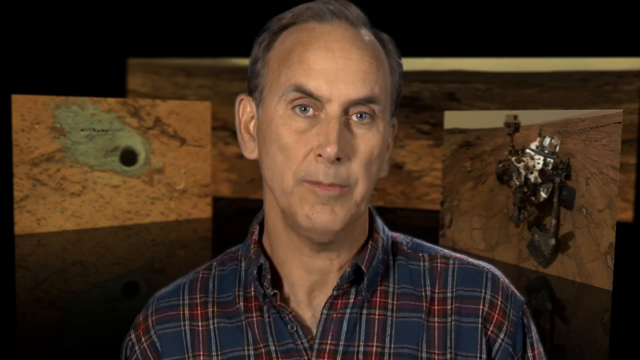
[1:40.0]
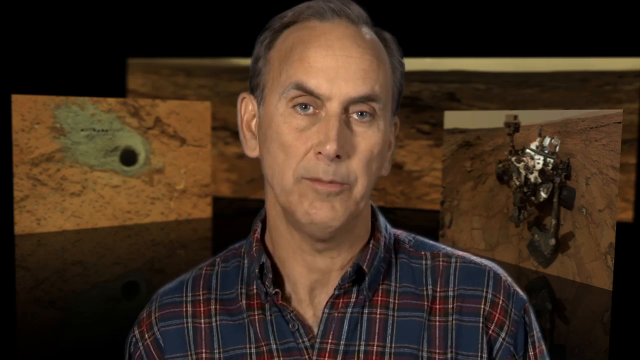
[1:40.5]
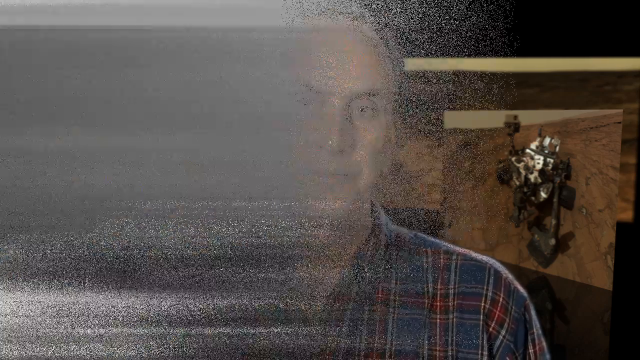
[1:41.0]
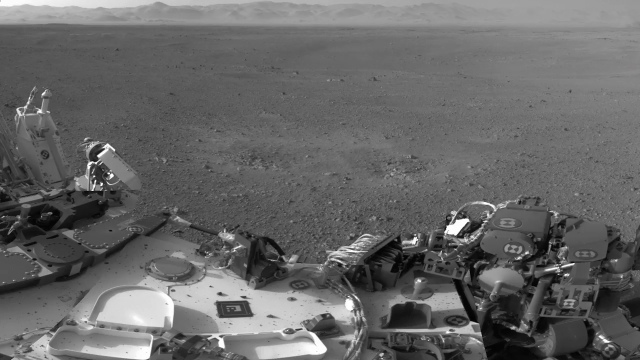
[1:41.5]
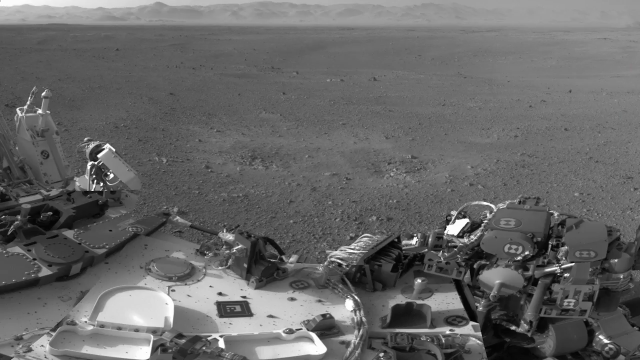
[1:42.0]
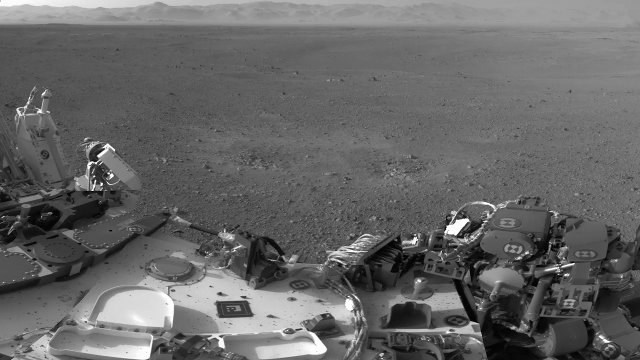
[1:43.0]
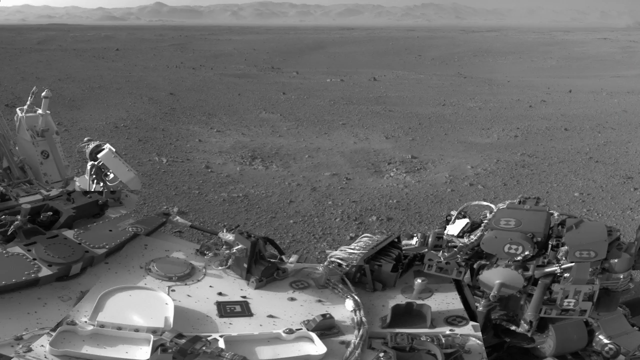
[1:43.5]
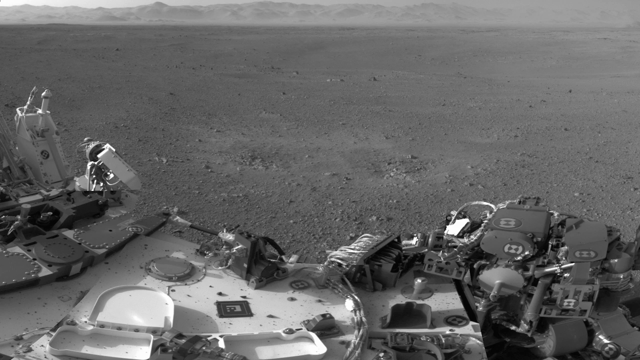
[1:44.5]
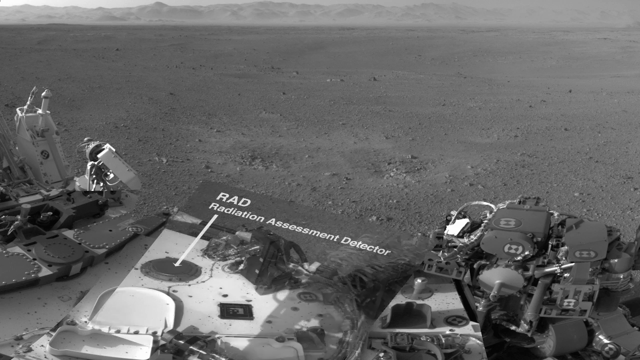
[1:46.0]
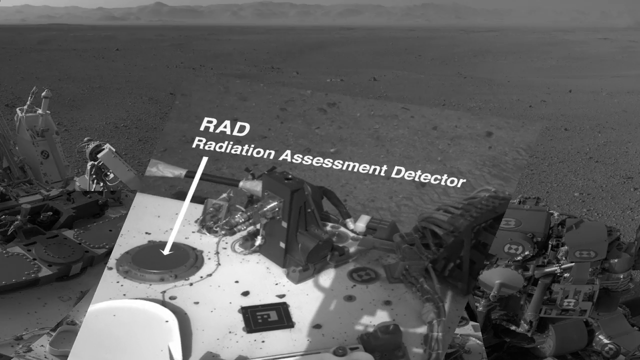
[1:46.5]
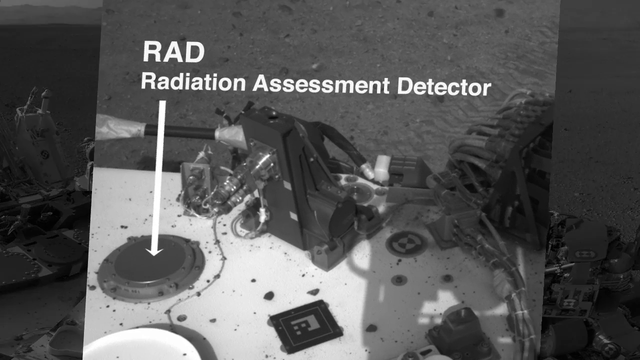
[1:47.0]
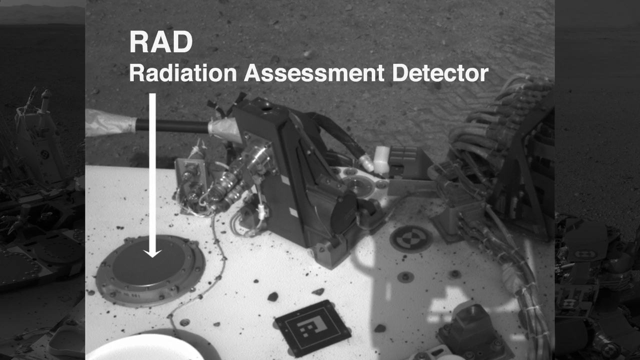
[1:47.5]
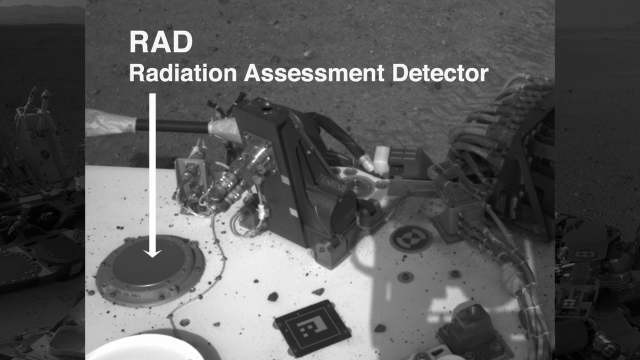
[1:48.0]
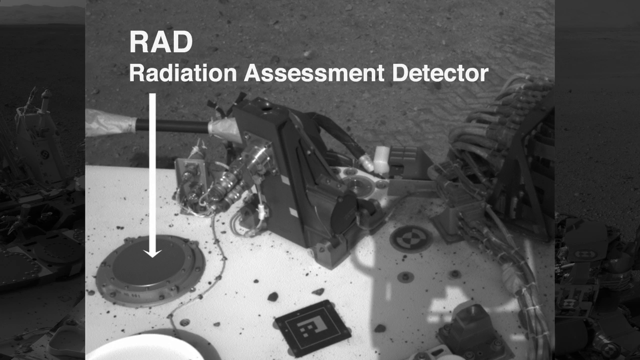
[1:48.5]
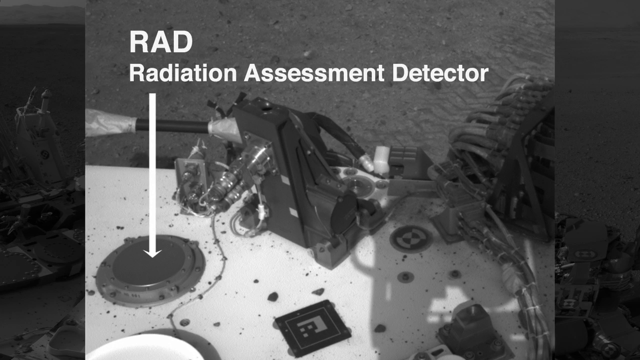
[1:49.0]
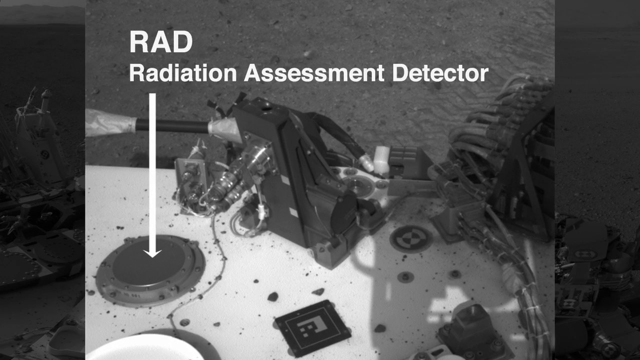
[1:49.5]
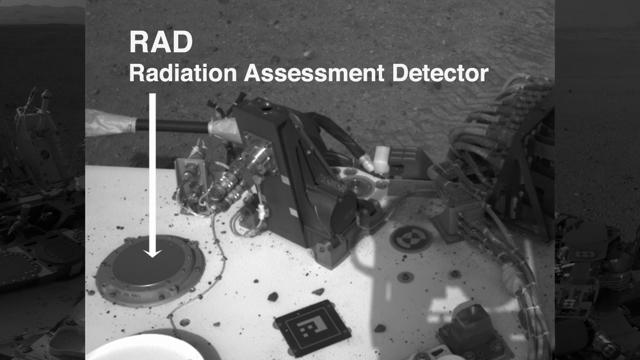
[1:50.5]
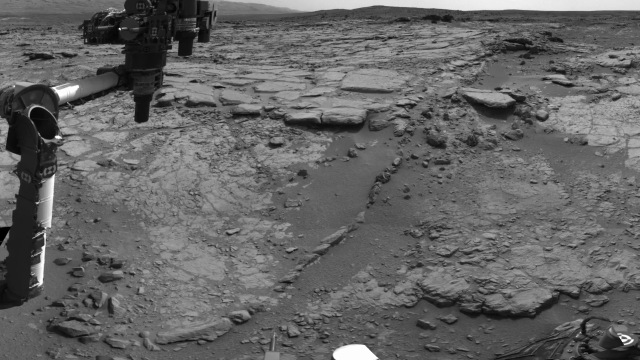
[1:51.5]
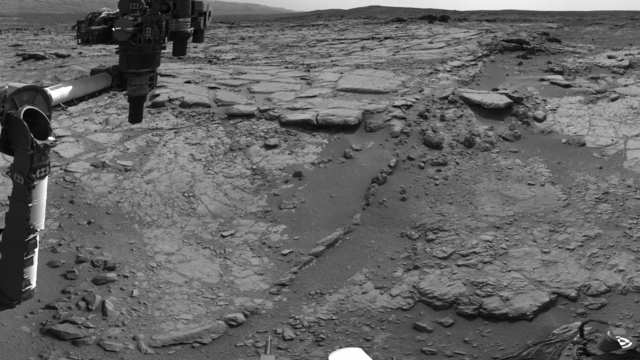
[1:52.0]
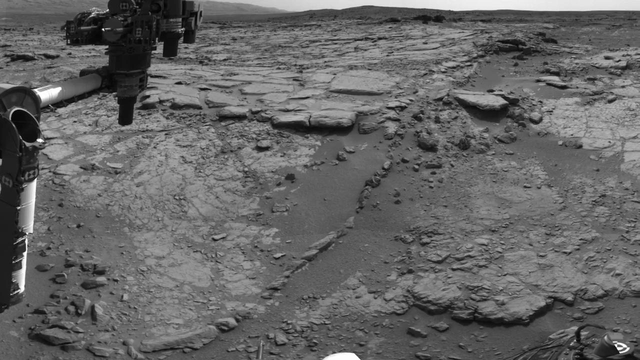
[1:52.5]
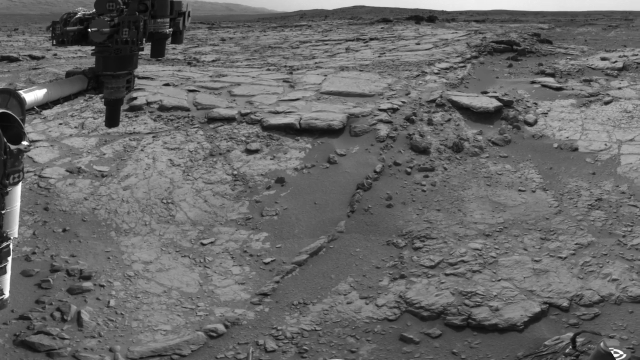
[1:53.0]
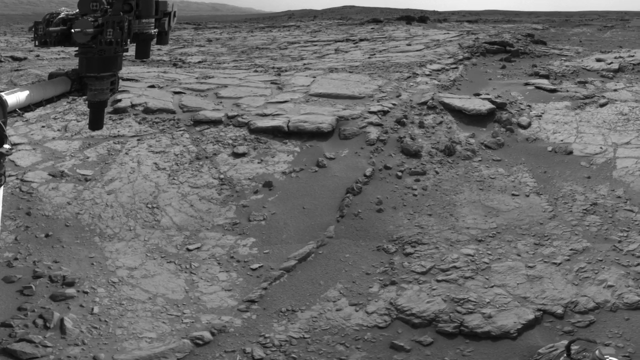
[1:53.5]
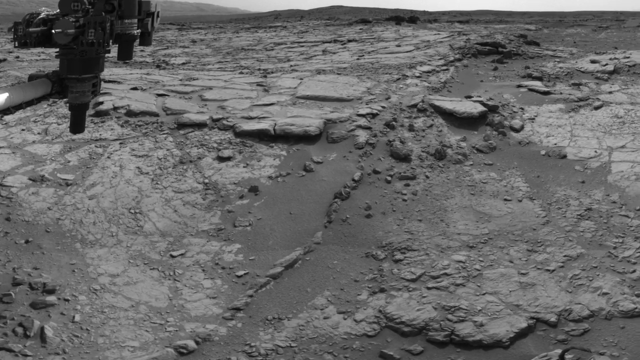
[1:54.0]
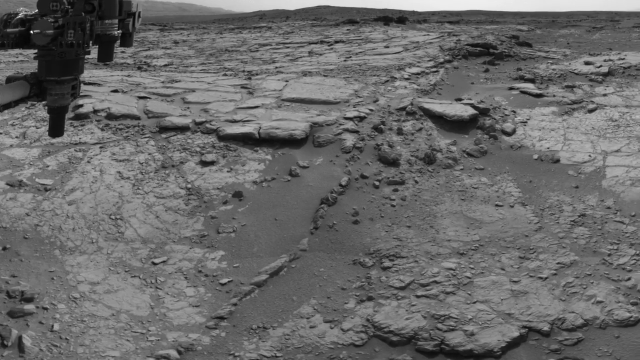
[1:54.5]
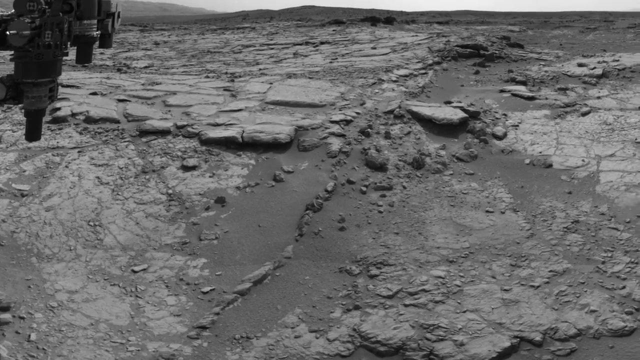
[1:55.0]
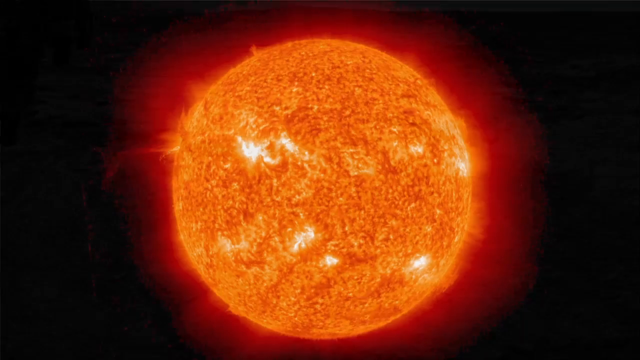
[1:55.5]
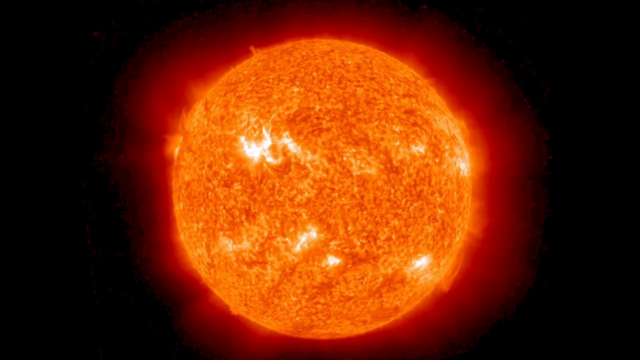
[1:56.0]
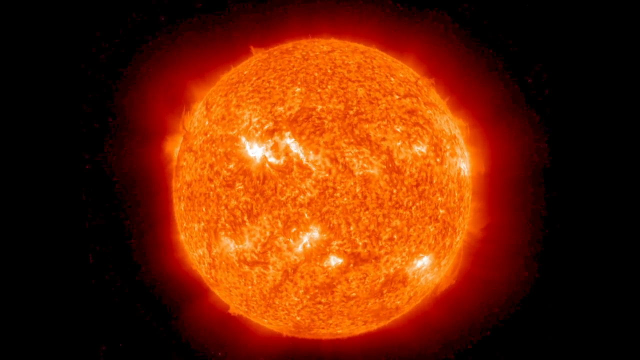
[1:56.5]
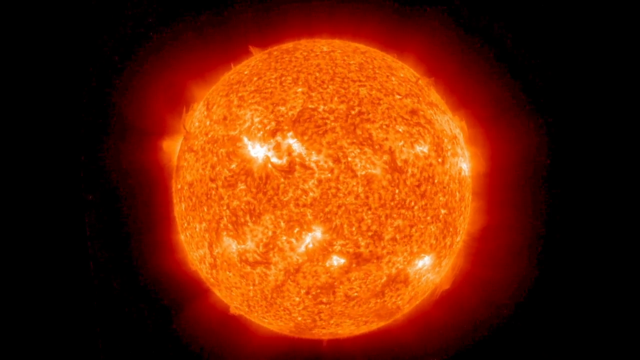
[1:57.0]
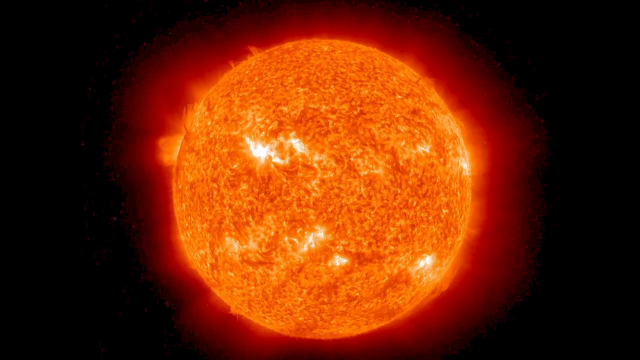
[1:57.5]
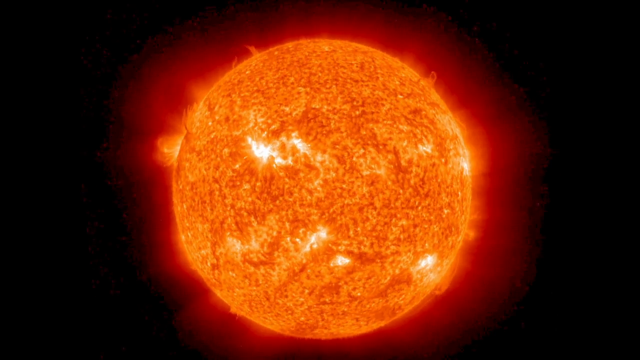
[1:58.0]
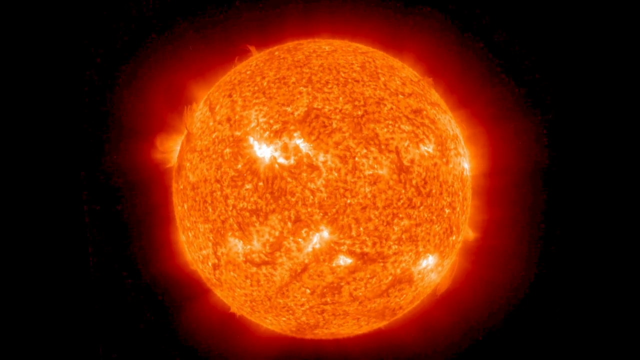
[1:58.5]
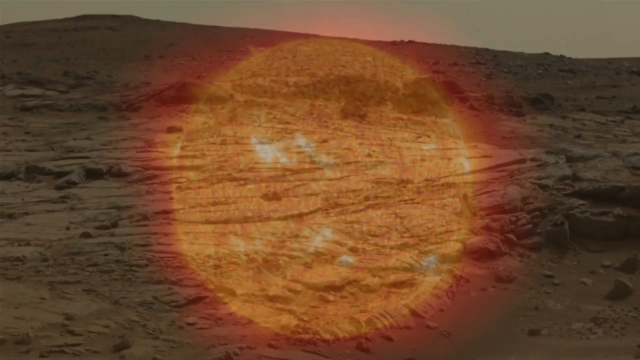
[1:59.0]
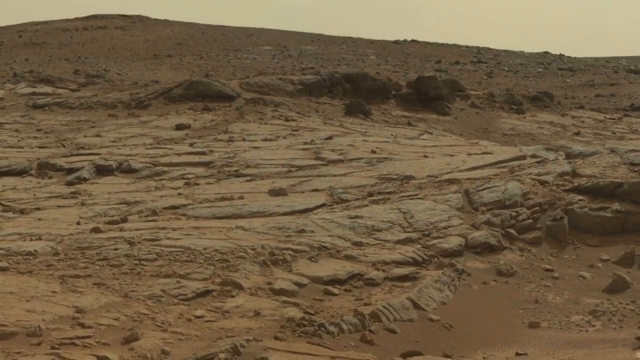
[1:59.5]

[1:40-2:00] More detail about the findings appears. The circle was maybe a radiation assessment detector used to detect radiation. There is a very bright, fiery orange and red picture of something unclear, perhaps the sun, the moon or radiation, apparently picked up by the radiation assessment device. The researcher explains in front of the three pictures, then the radiation assessment detector is shown, apparently with the hole shown earlier. The gigantic equipment is there as well, along with the picture of Mars and more pictures highlighting the hills of Mars.